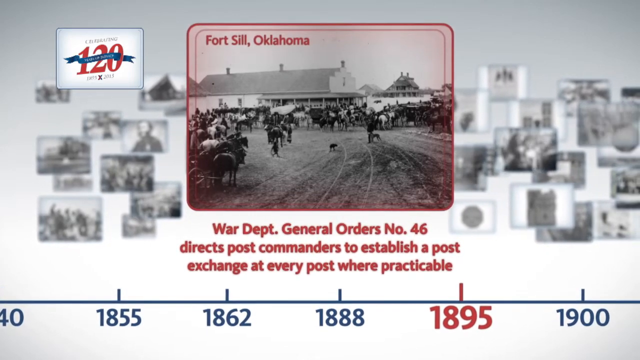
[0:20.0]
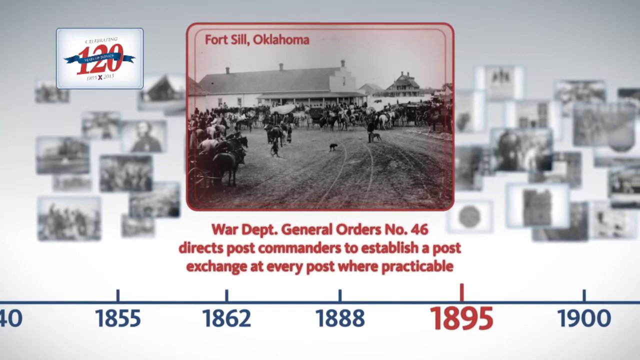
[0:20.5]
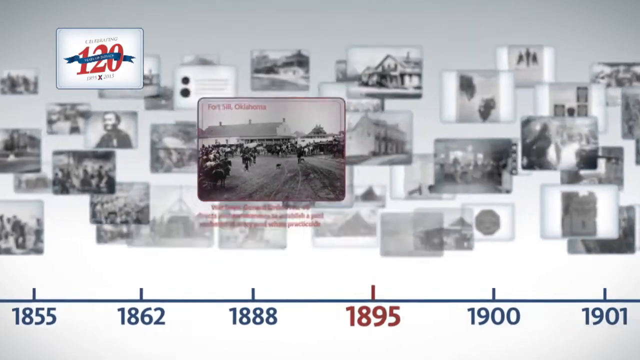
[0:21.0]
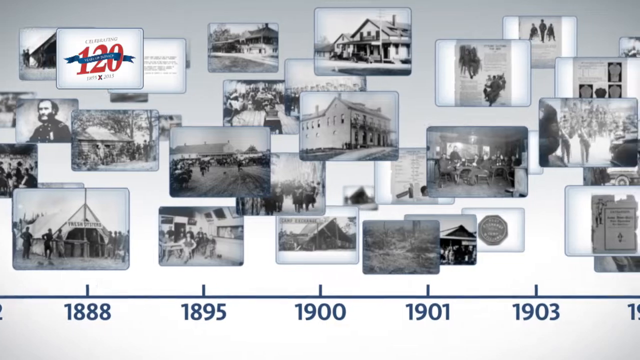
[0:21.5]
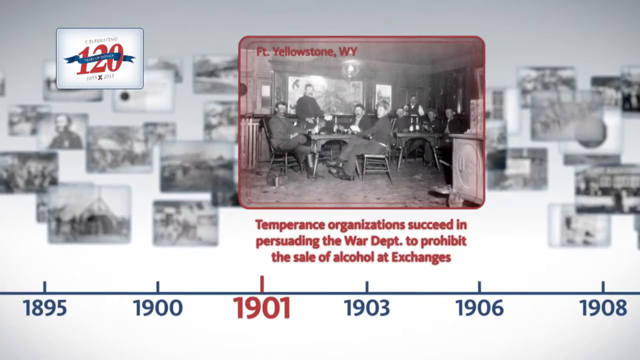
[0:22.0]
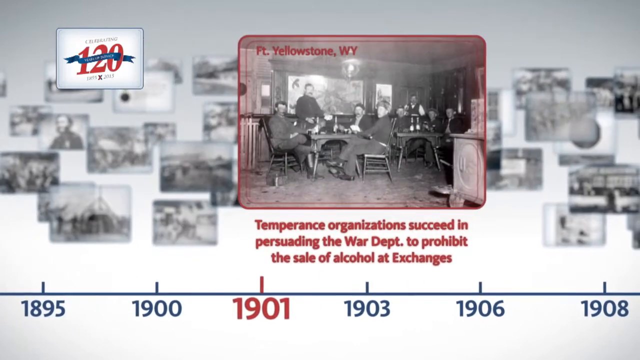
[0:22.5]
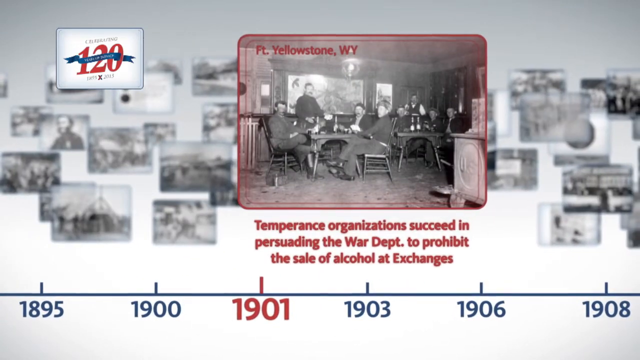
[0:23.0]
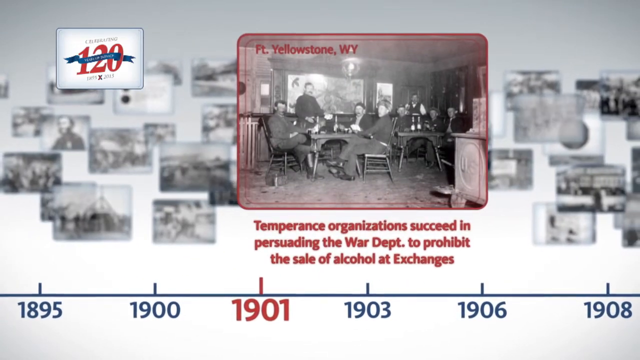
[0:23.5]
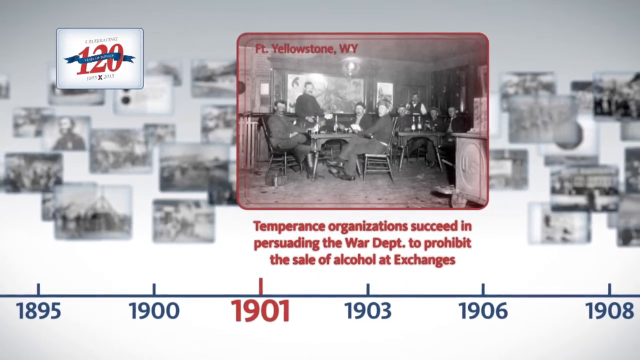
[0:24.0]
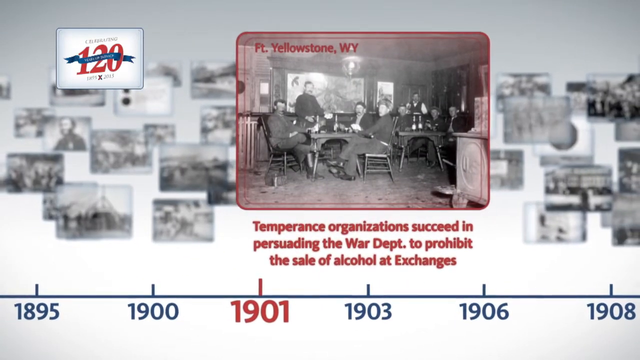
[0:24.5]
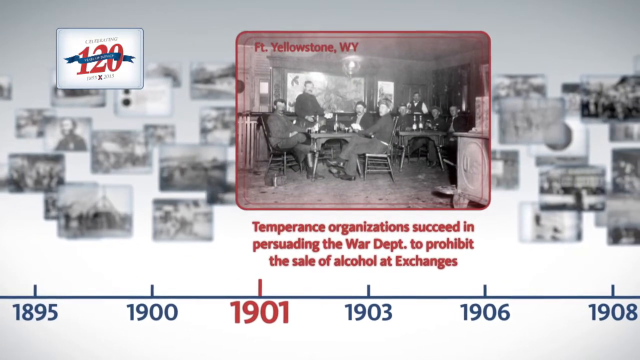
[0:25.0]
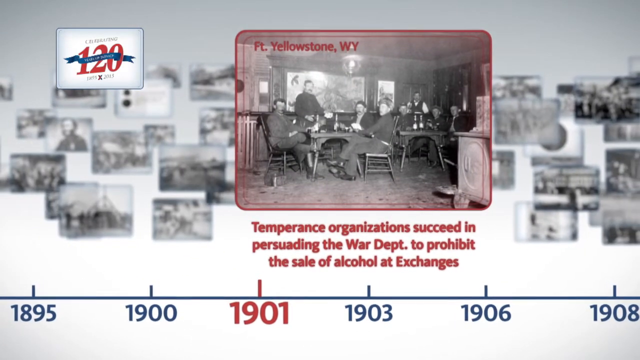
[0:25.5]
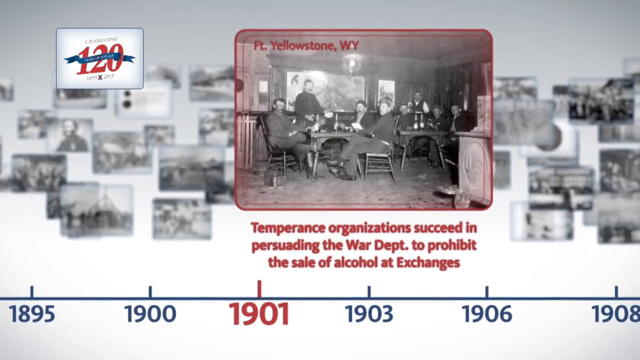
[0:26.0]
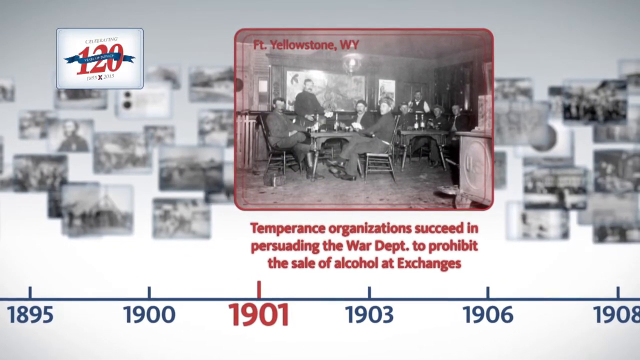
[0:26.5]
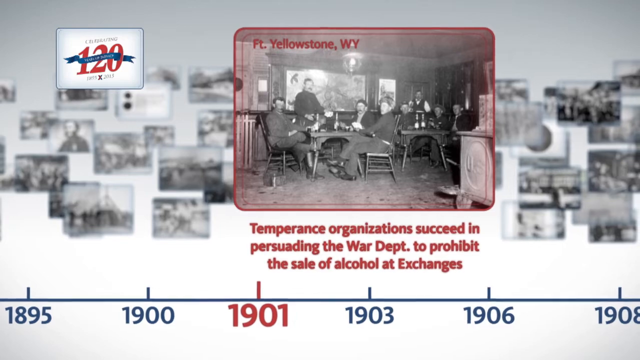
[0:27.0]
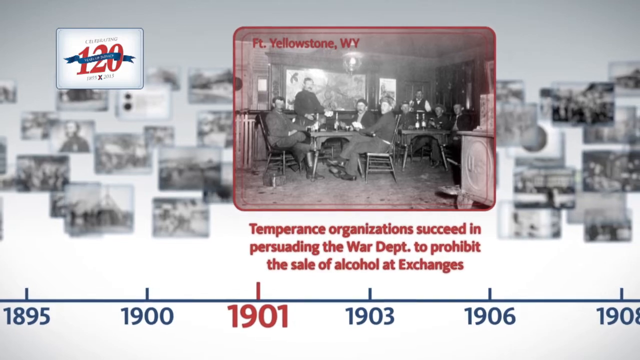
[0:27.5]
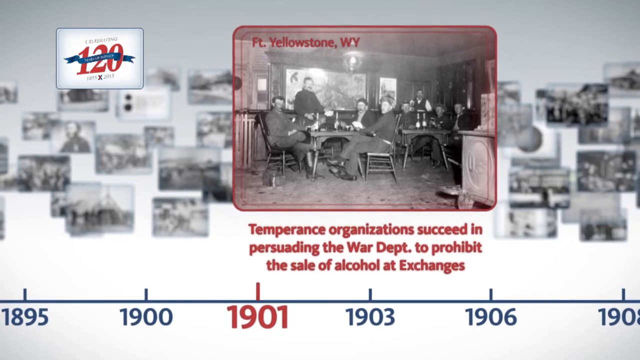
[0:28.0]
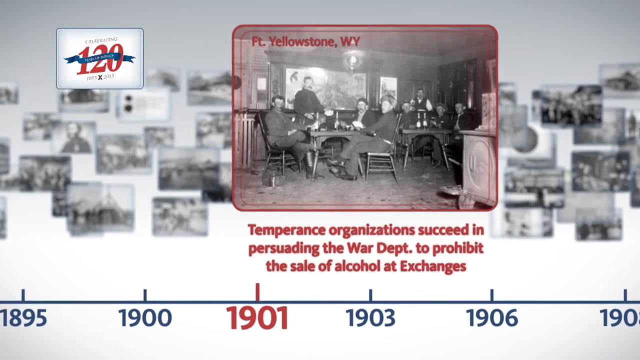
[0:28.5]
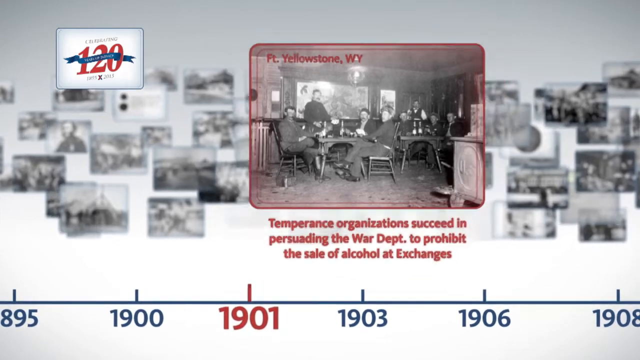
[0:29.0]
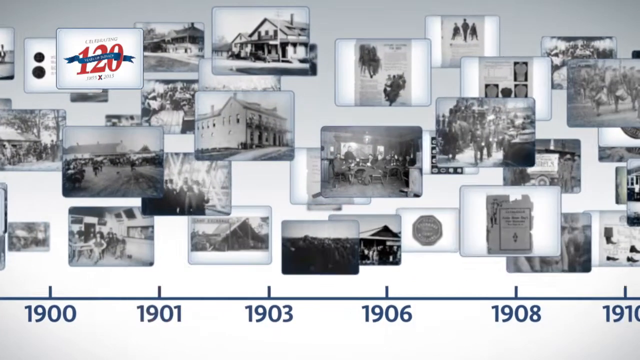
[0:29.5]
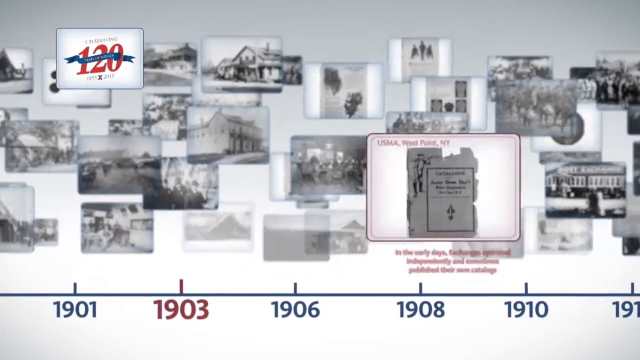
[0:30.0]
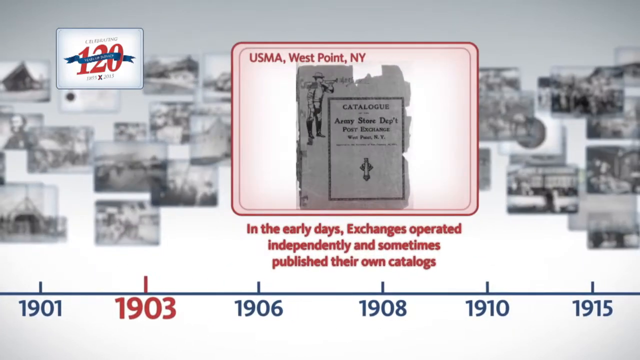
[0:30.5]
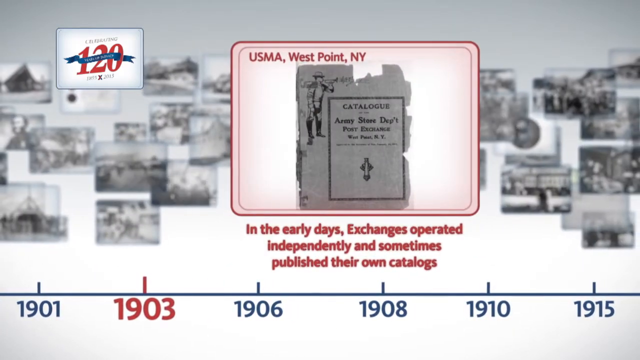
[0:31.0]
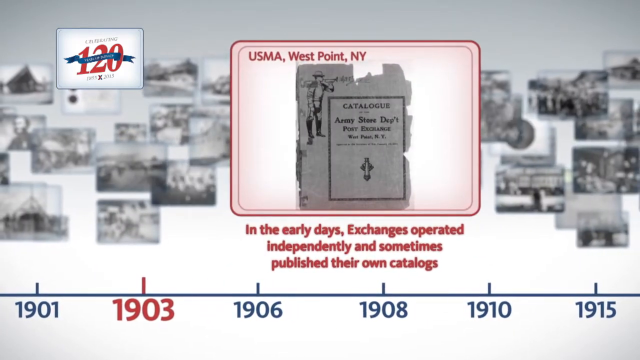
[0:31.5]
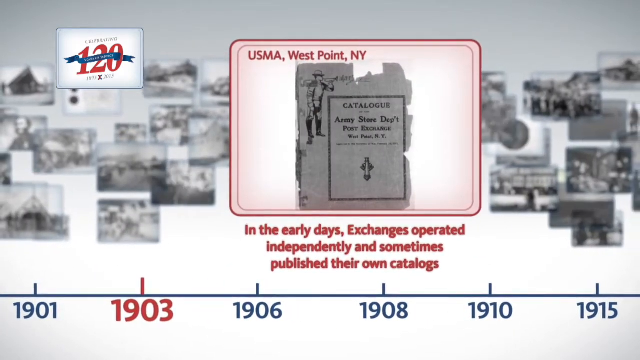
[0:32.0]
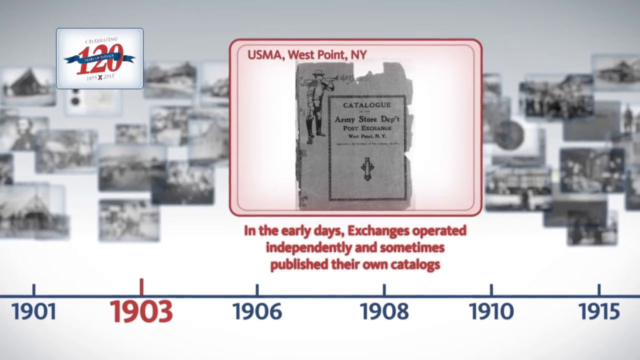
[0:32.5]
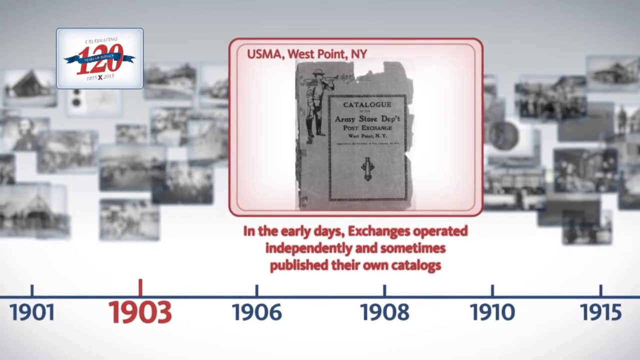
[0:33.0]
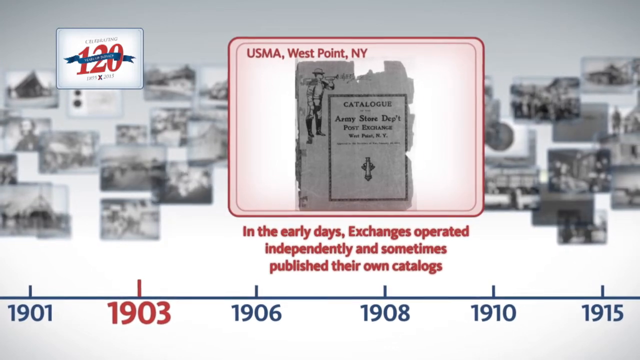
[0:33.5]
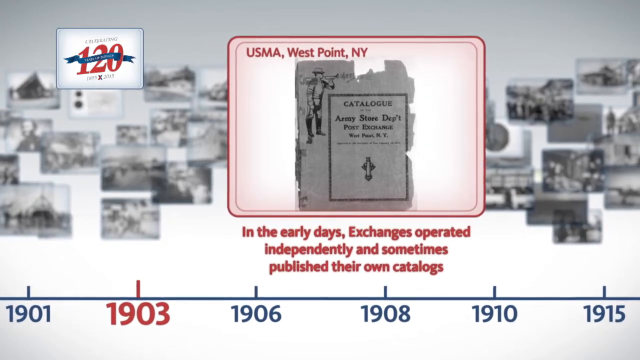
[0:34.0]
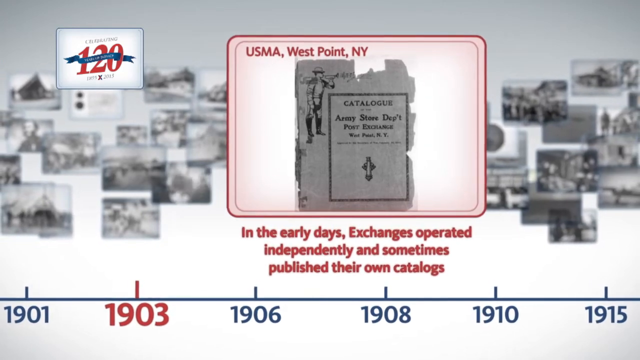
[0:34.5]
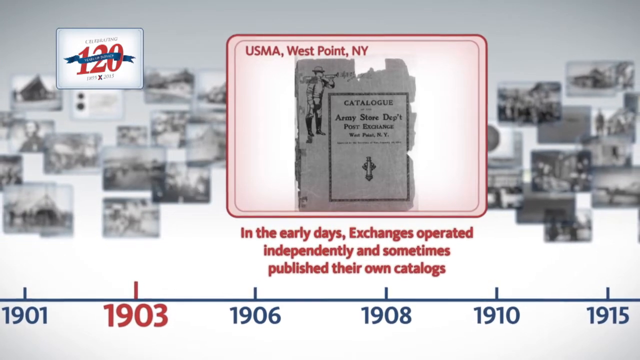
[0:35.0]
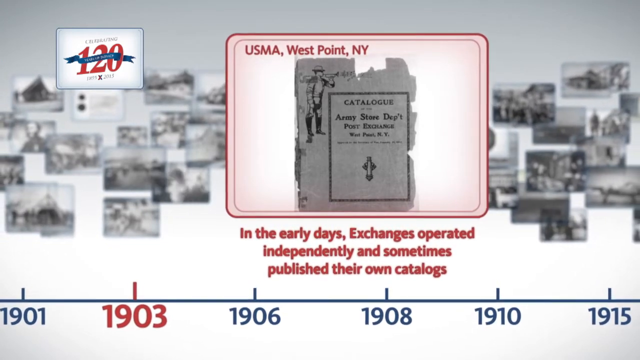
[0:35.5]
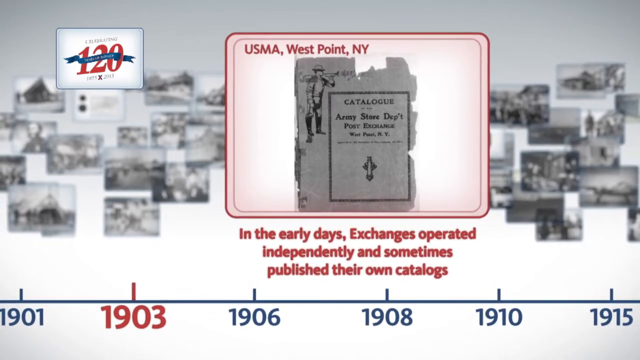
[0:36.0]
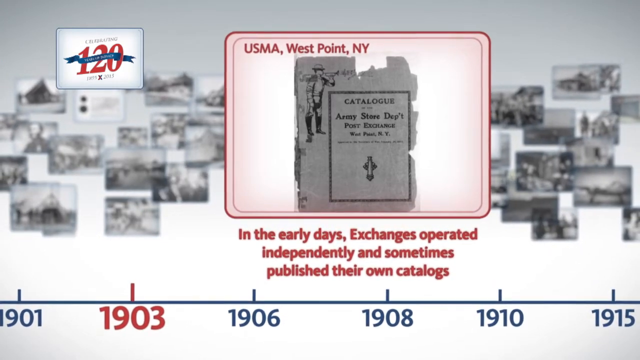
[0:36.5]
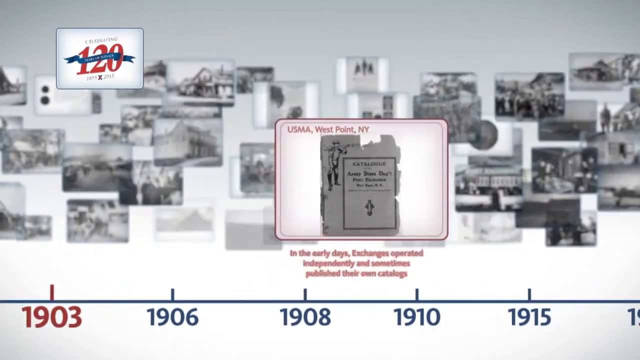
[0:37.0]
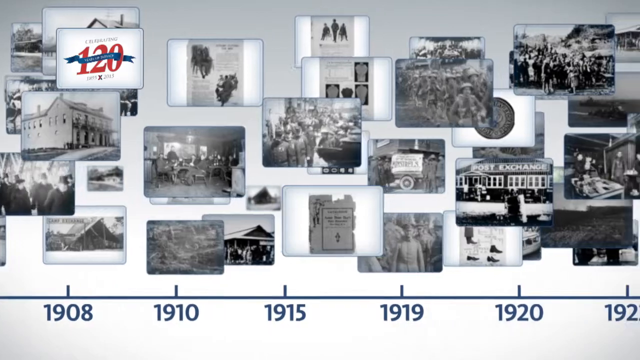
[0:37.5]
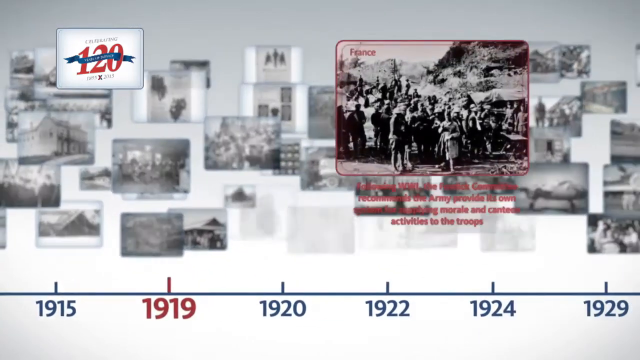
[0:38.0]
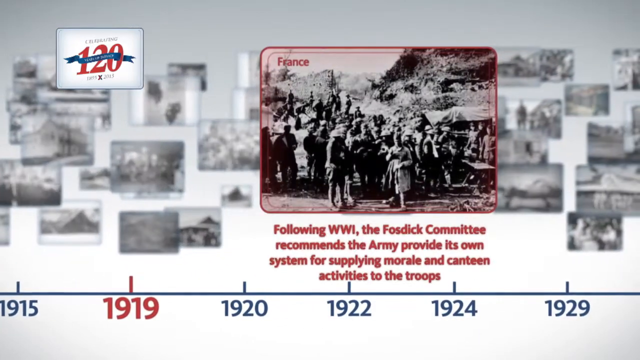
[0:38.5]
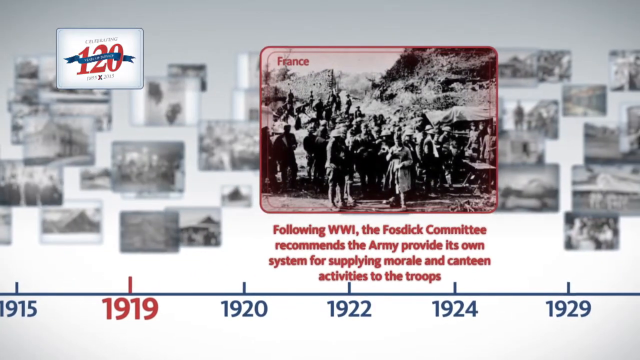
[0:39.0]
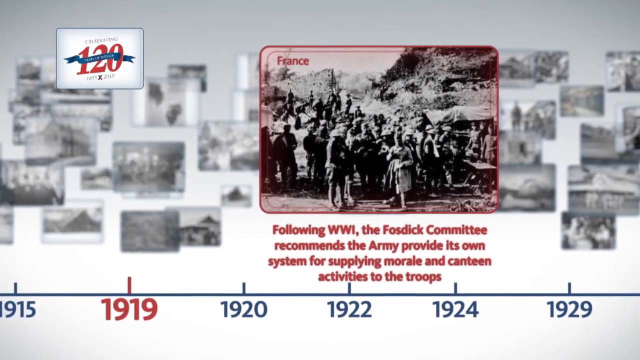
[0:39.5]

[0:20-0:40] The timeline moves to 1901 with a close-up of another black and white photograph from Fort Yellowstone, Wyoming, marking when temperance organizations succeeded in persuading the War Department to prohibit sales of alcohol at exchanges. The highlighted photograph is bordered in red, with the red fading into the photograph. It shows eight men in a room looking at the camera; they are sitting down except for one man who is standing.